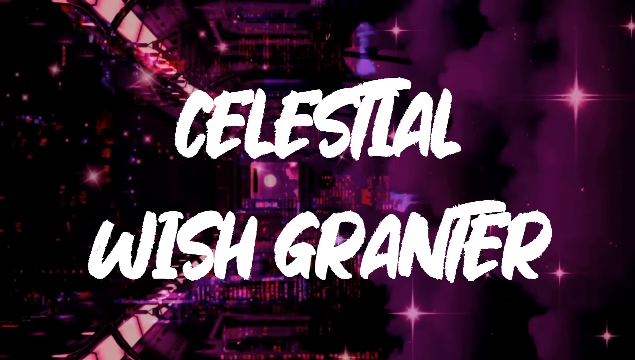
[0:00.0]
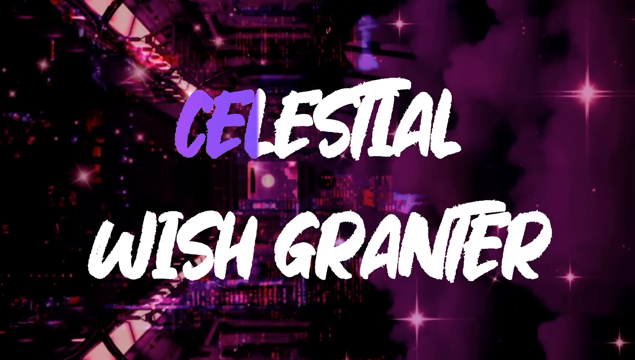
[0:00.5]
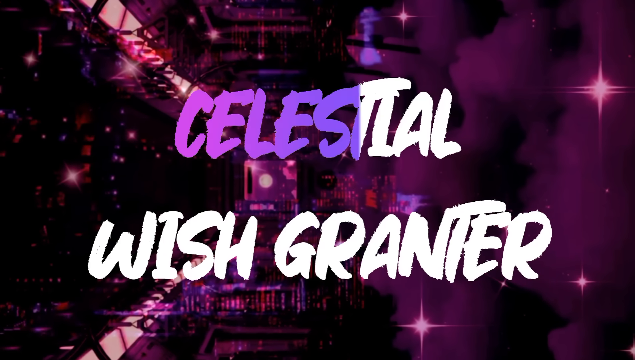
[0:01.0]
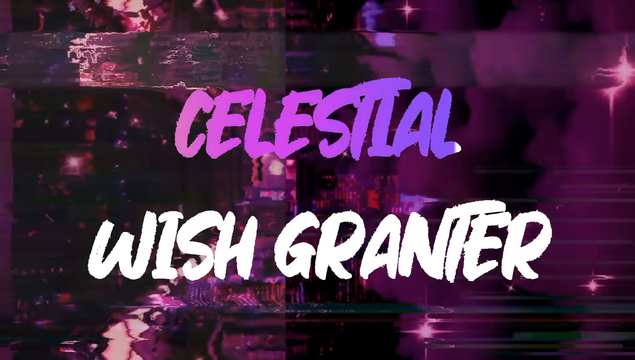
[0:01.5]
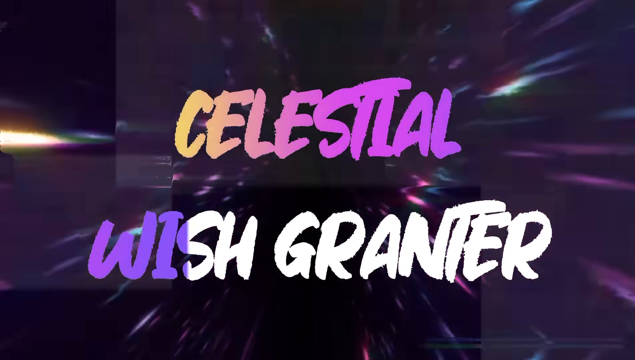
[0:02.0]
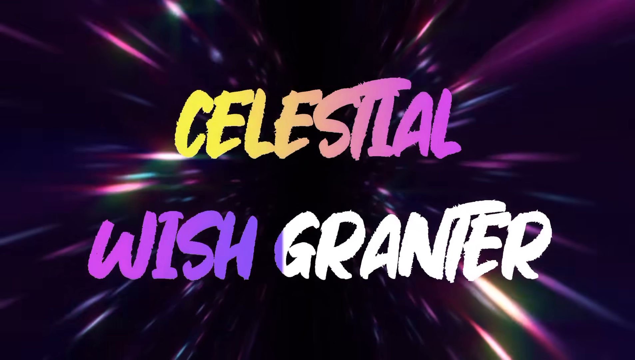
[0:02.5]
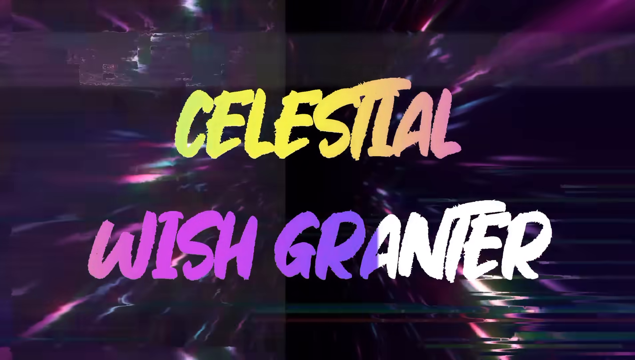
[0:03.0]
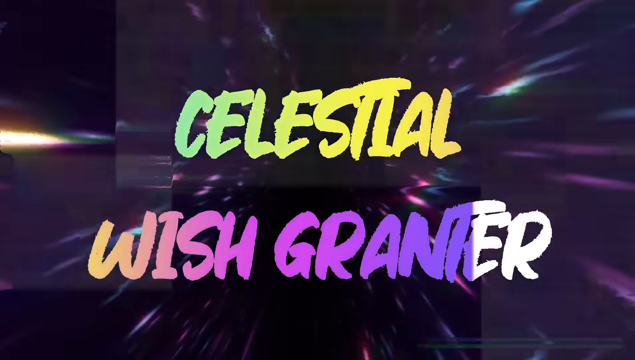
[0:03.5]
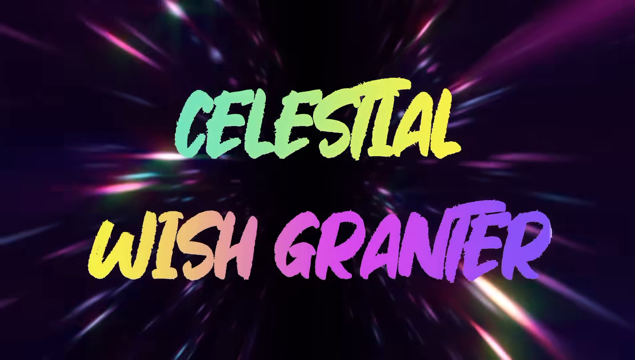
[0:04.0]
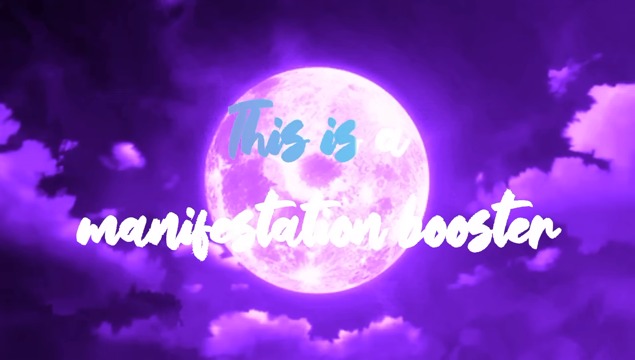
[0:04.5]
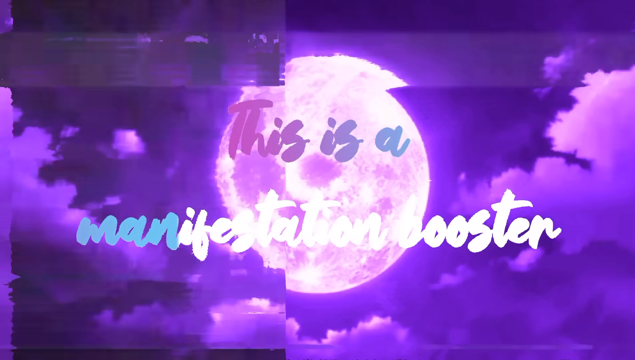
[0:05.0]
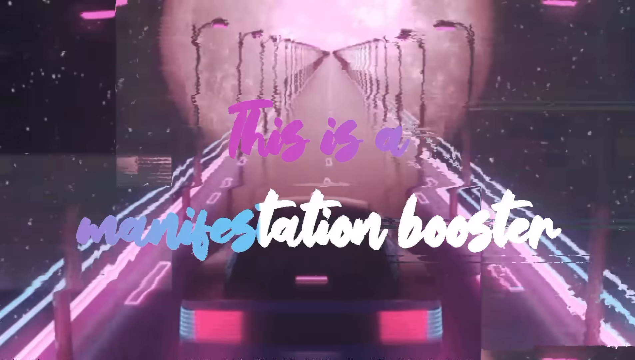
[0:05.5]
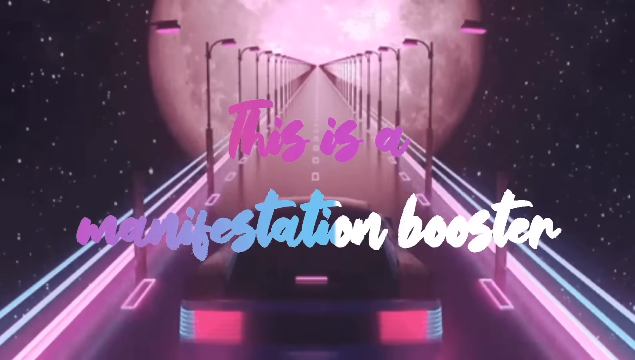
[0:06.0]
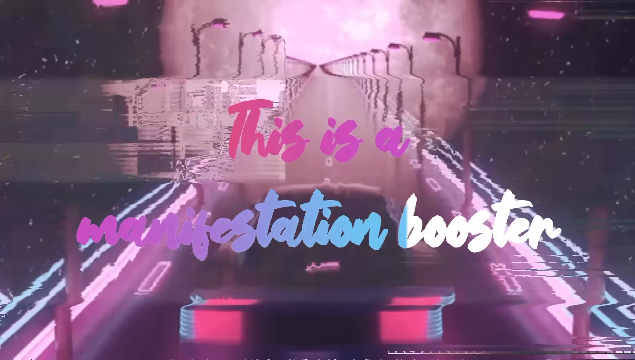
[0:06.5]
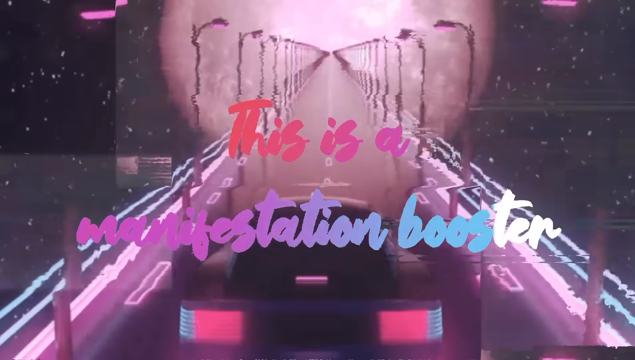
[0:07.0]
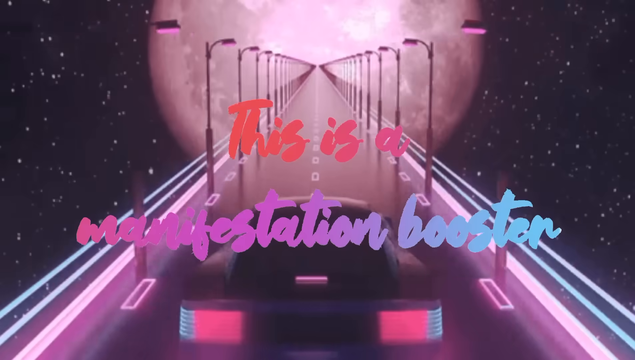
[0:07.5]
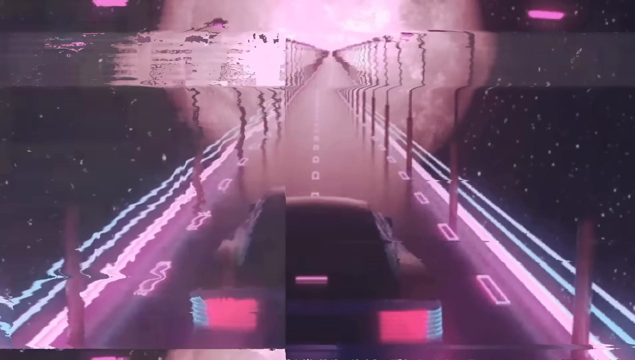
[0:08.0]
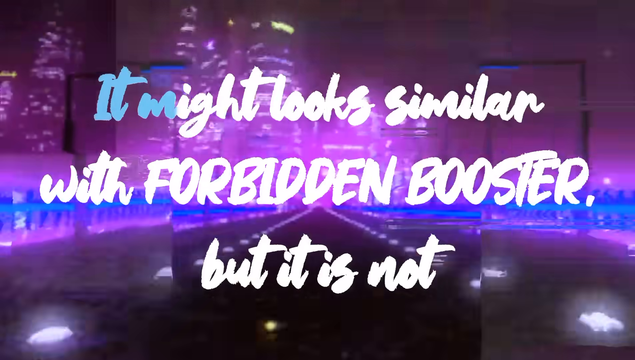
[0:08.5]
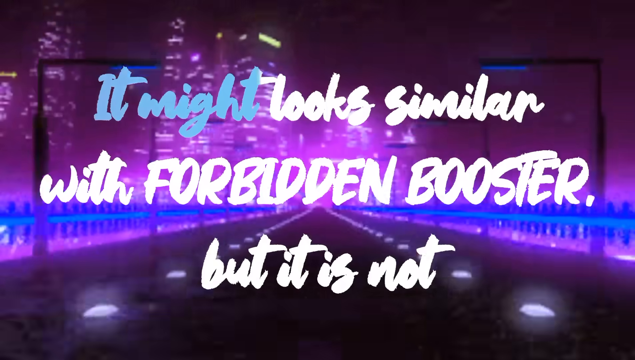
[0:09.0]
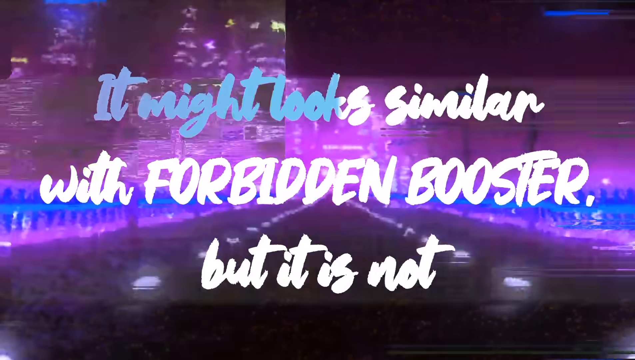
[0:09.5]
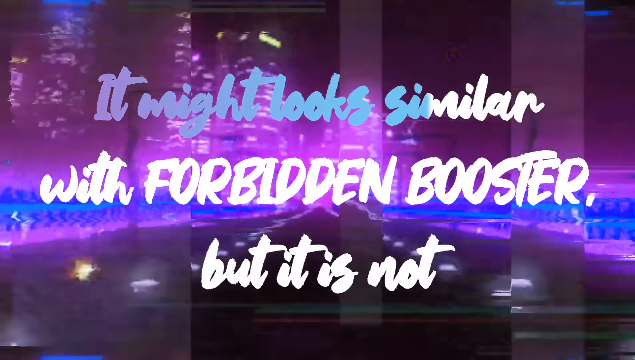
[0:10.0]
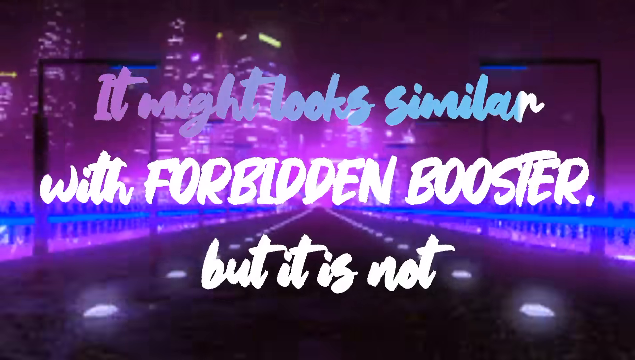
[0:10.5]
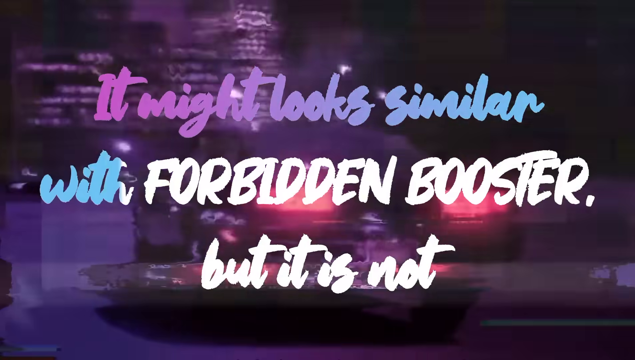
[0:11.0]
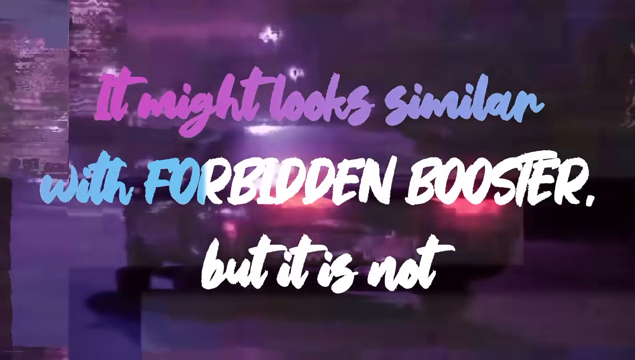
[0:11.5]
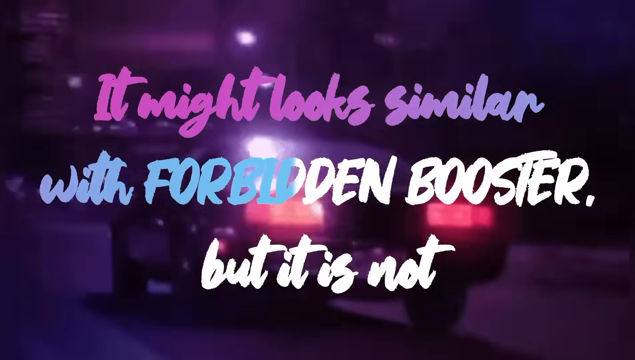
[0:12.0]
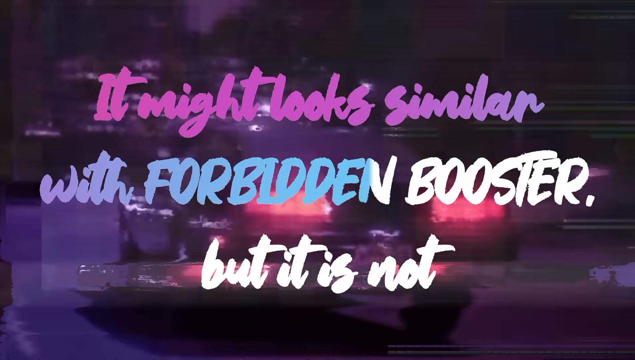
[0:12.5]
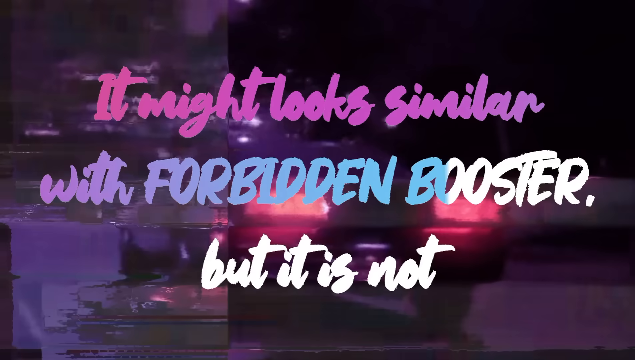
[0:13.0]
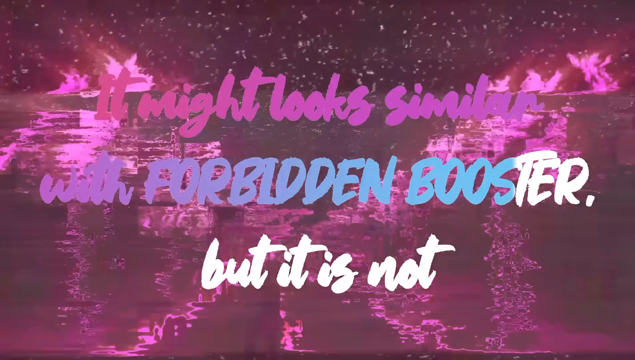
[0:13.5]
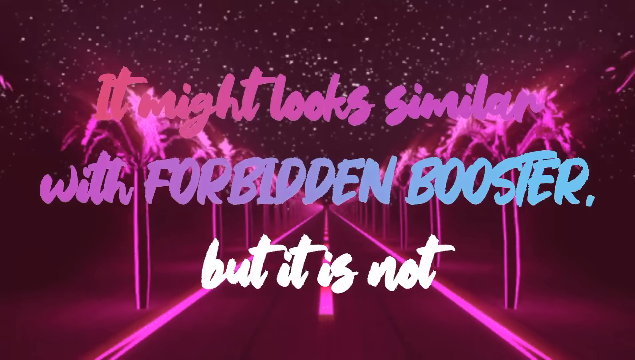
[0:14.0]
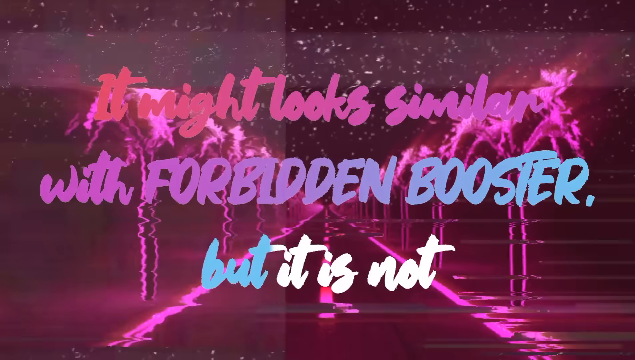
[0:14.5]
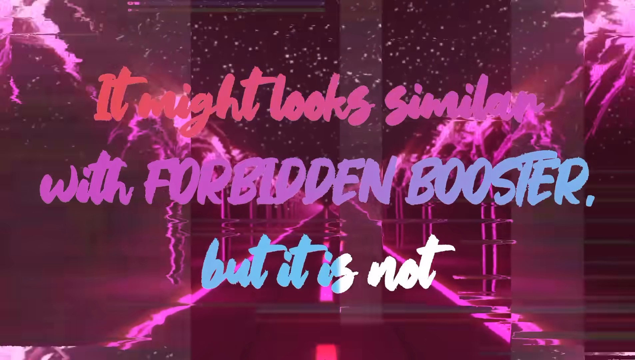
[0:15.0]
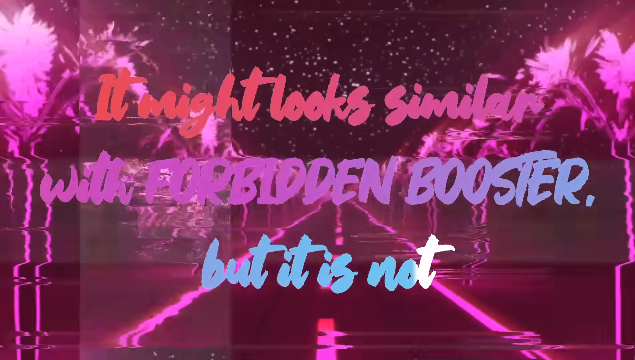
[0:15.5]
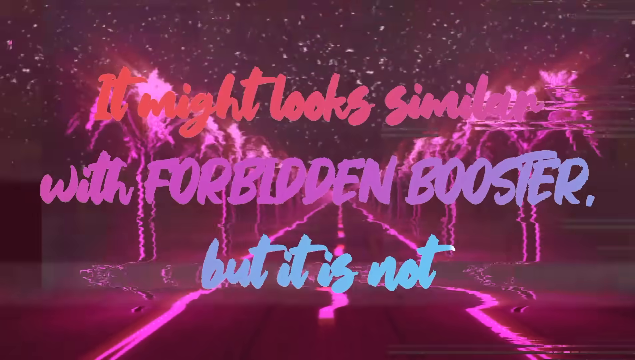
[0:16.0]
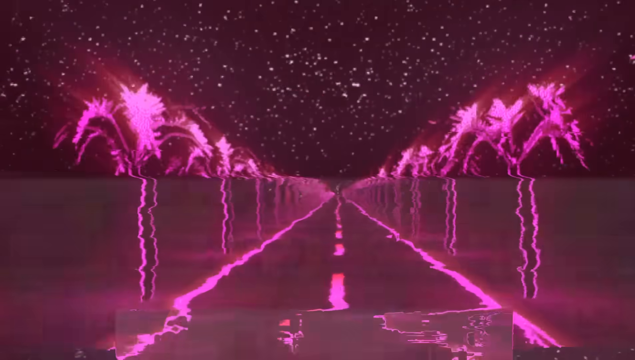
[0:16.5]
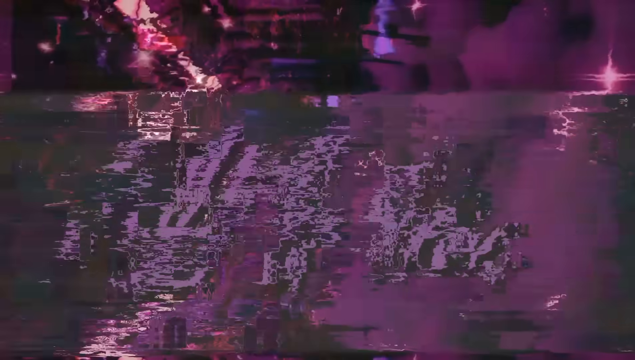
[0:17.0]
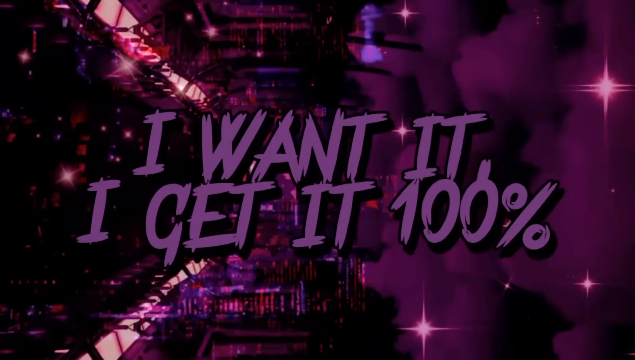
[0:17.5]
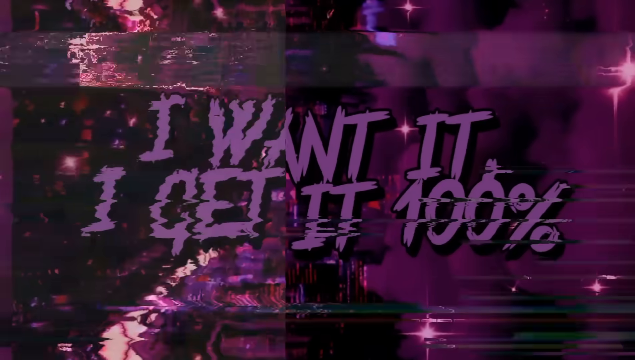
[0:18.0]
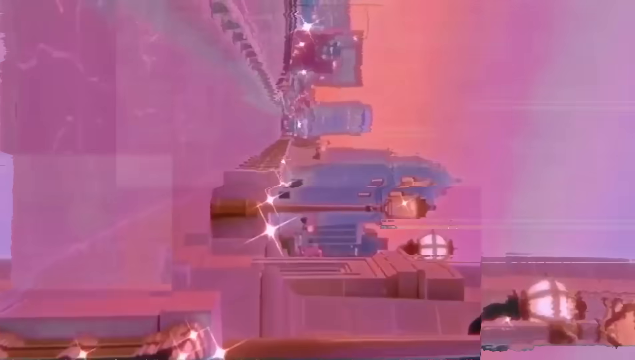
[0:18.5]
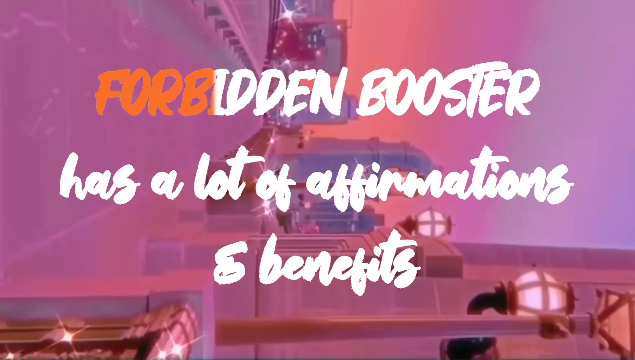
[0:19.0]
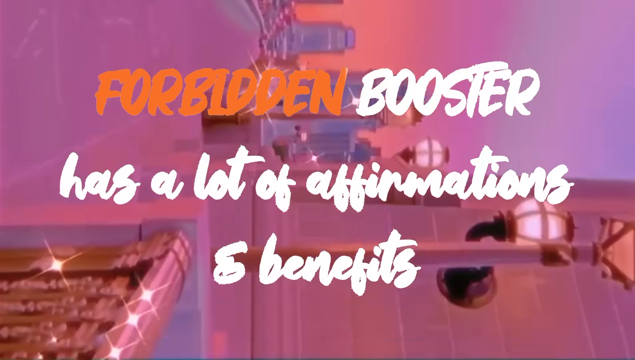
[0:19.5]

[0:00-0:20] The video is called Falling Star, I want it, I get it, and may be a music video. Text on screen reads "Celestial Wish Granted." The footage is very sped up and very artsy. Text says "it might look similar with Forbidden Booster but it is not," followed by "I want it, I get it," "Celestial Wish Granted," and "this is a manifestation booster." It shows a sort of artsy video of a car in a city, then going down a palm-tree-lined street. Text appears against the backdrop of a moon, then a 1980s-style car is shown, and the text reads "I want it, I get it 100%."